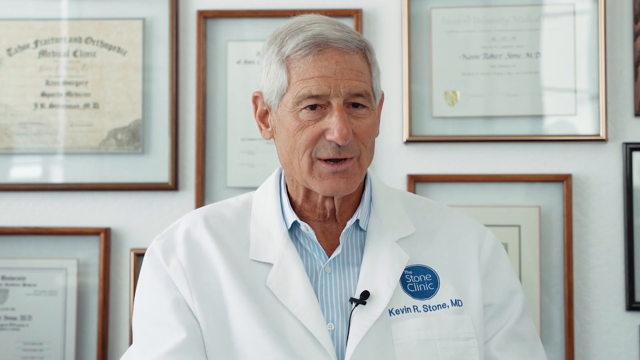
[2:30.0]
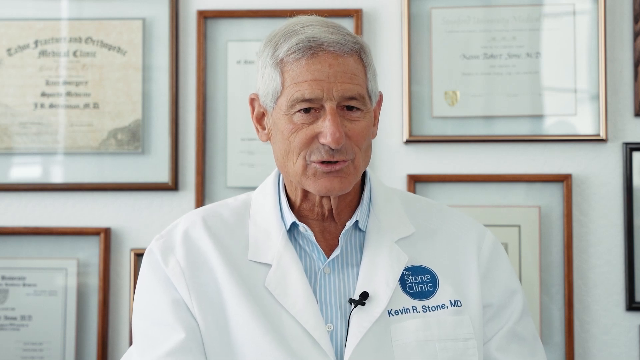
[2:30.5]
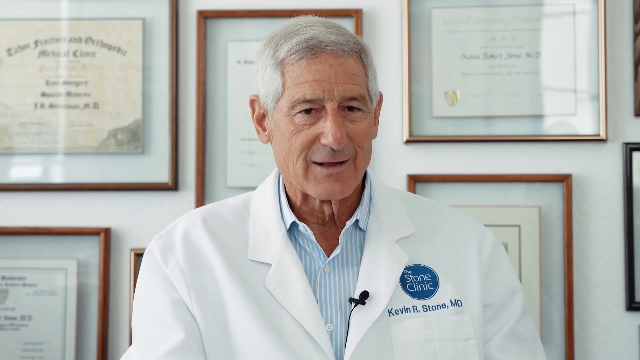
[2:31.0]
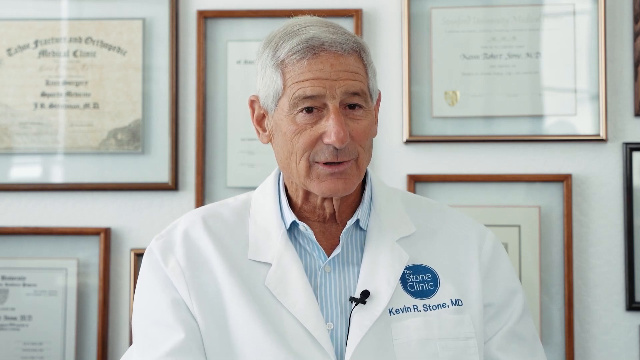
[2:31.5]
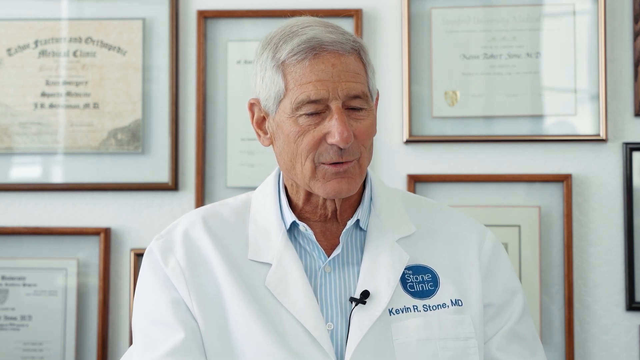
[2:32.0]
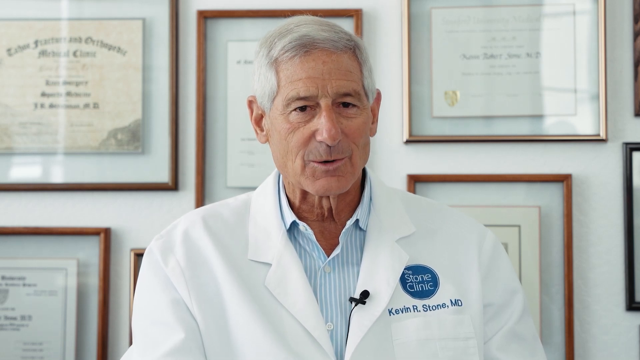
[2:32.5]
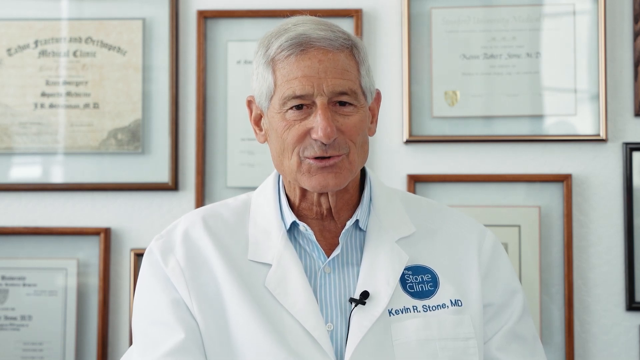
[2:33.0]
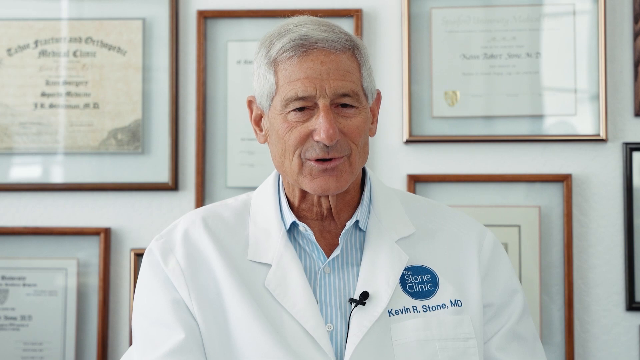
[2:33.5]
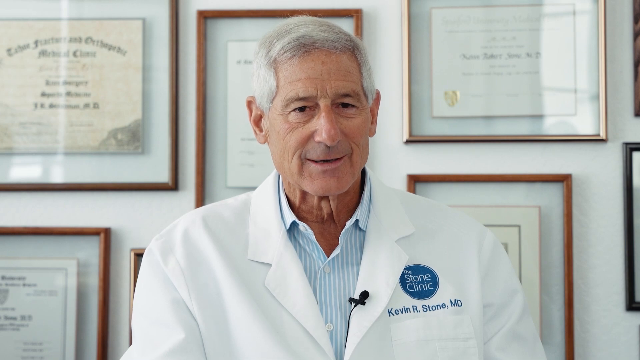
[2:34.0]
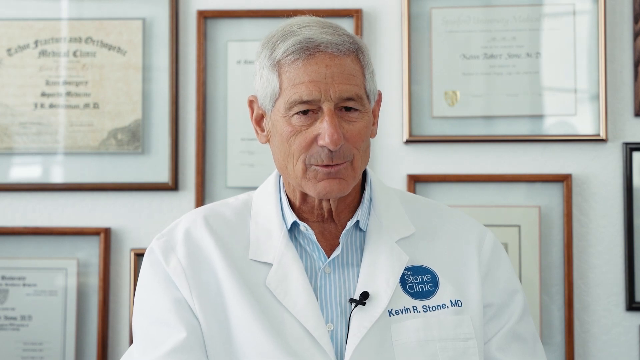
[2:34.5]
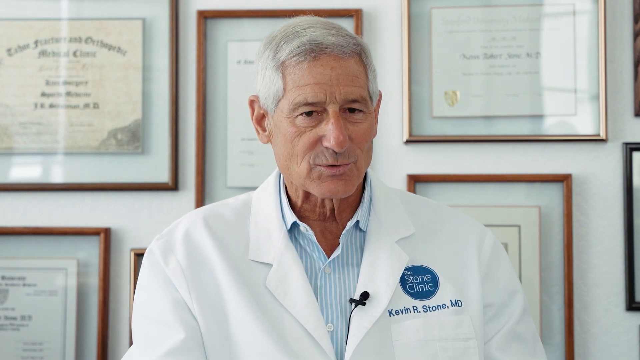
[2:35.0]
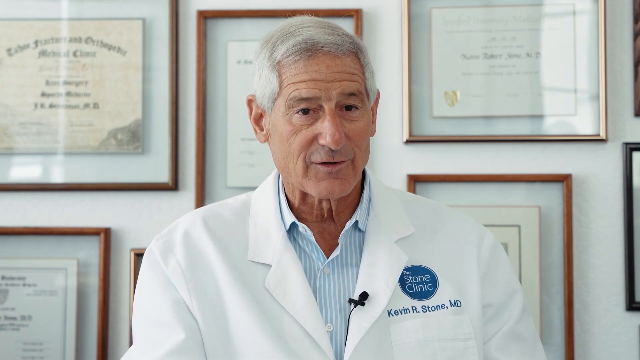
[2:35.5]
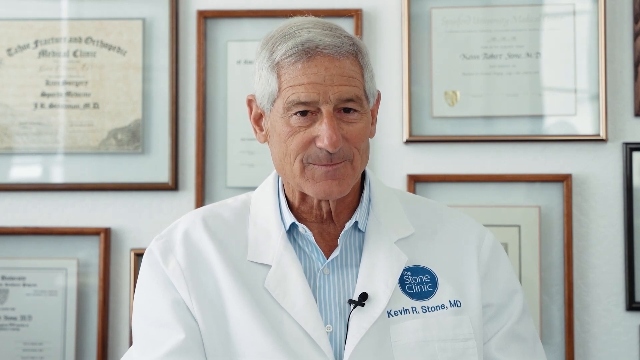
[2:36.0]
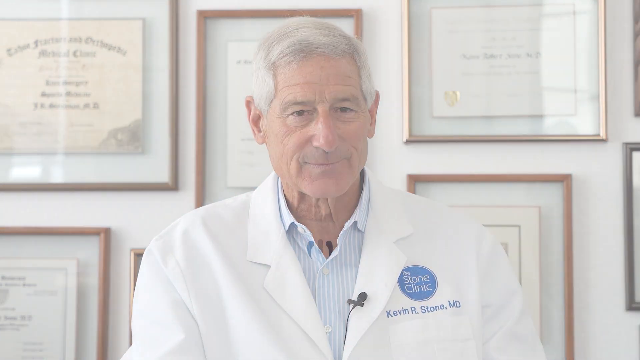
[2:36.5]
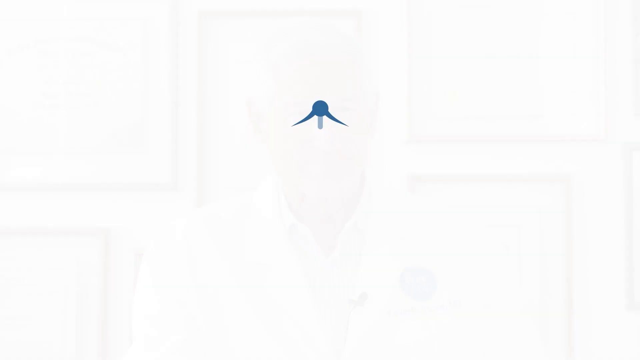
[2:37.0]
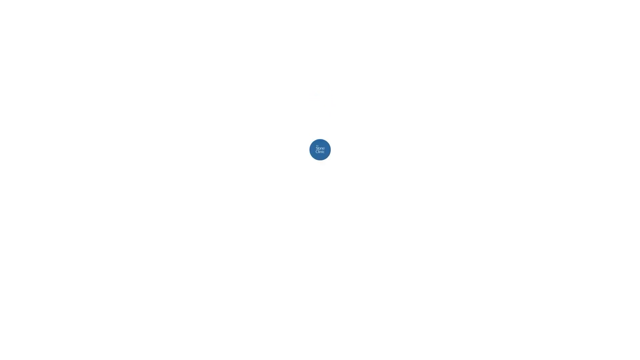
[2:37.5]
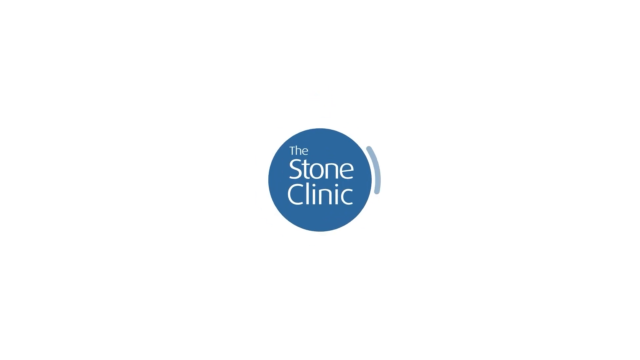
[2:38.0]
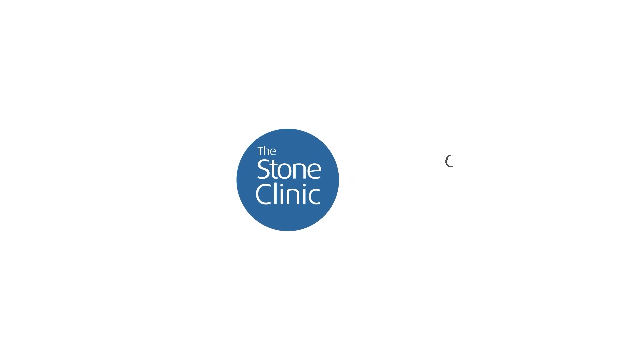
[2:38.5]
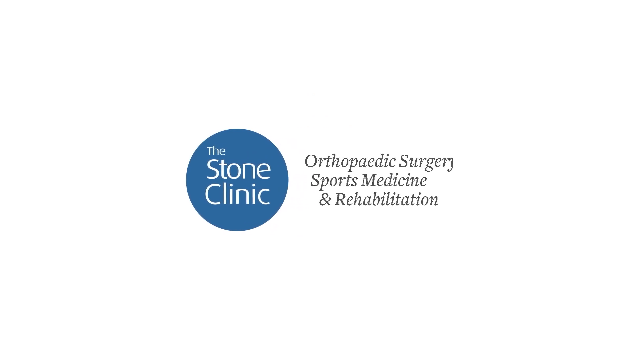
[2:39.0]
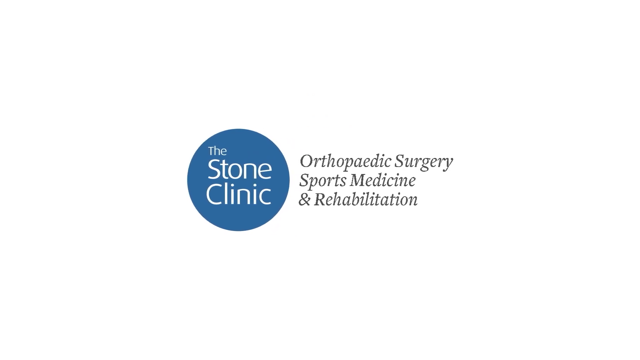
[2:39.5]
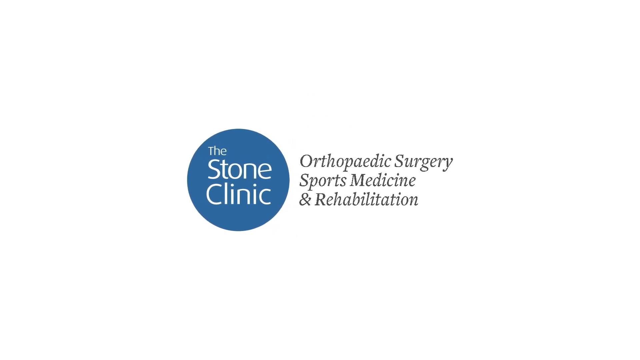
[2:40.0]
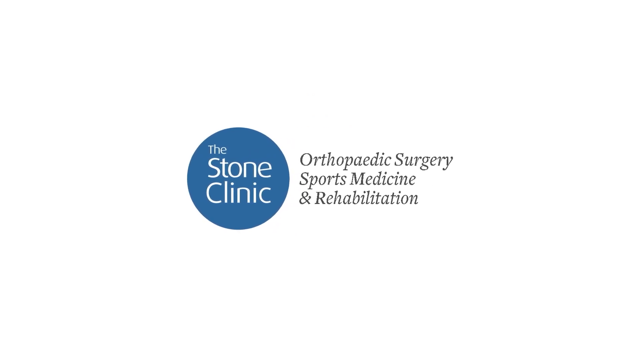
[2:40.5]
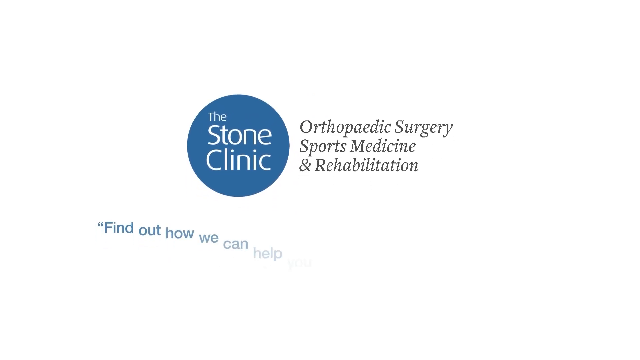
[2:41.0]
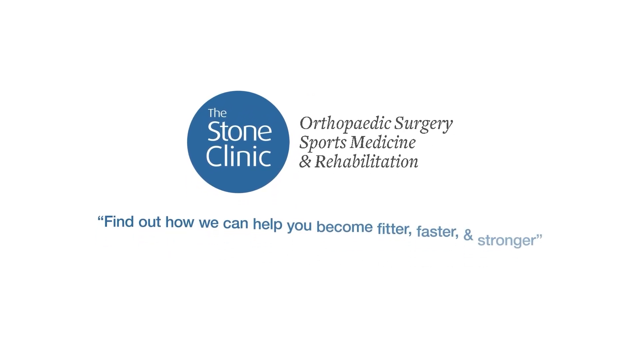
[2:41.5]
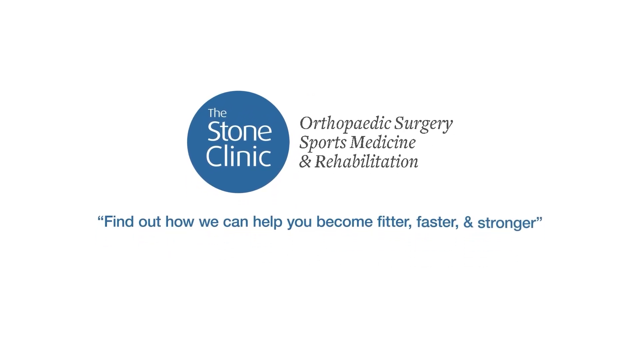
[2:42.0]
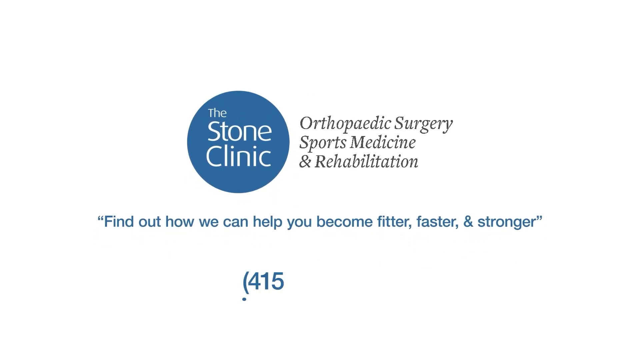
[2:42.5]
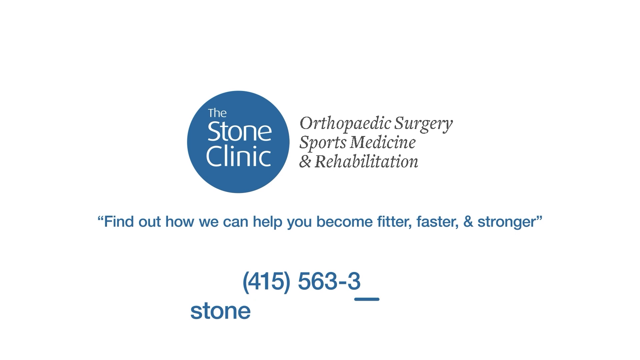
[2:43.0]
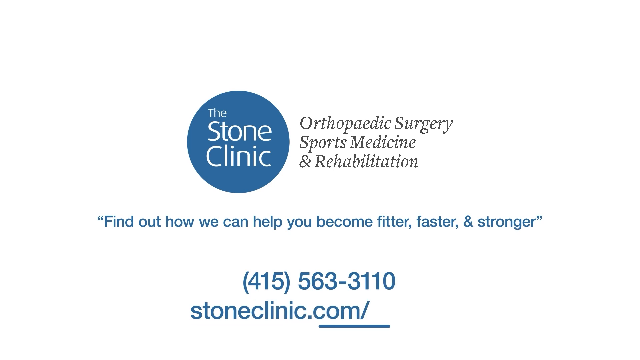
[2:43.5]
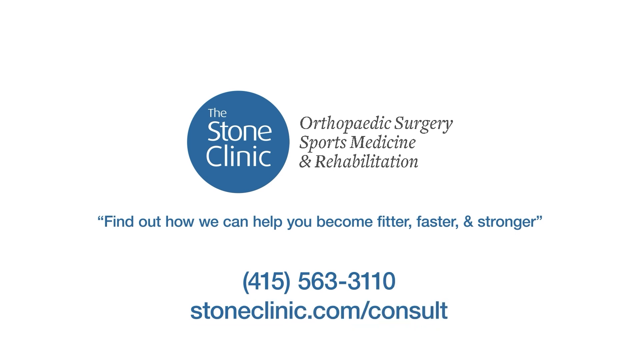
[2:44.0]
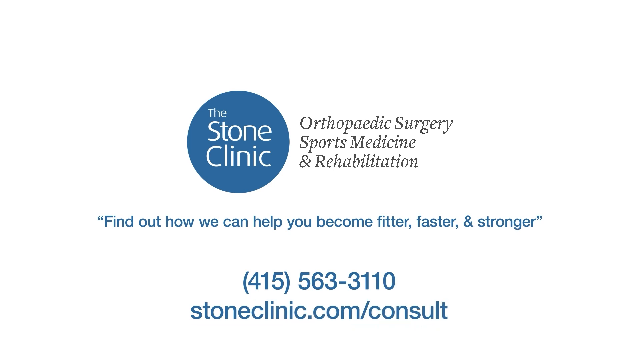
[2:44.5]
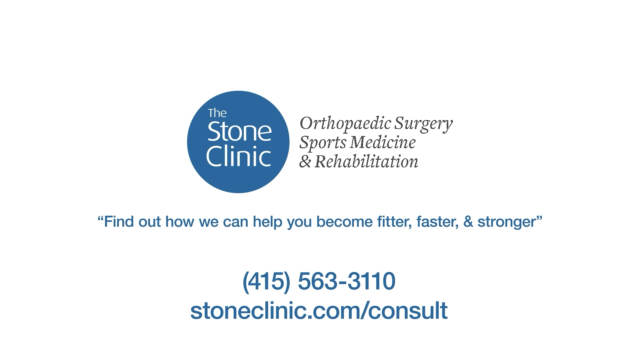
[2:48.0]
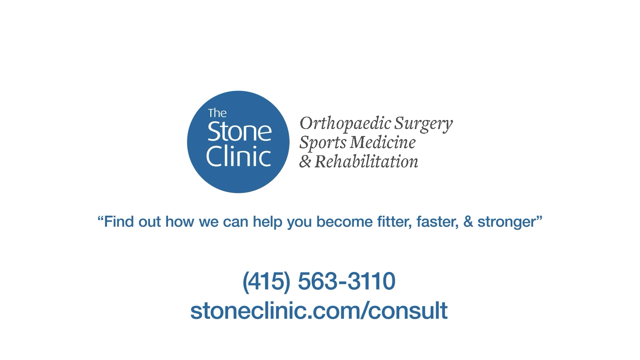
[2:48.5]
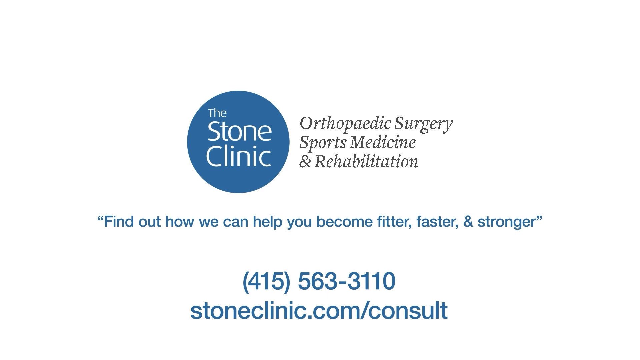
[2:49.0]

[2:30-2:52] Dr. Stone sits in his office being interviewed, in front of a wall with his framed diplomas and certificates hanging on it. He wears a white lab coat with a lapel microphone attached to the collar; on the left of the coat, the clinic's name, Stone Clinic, and his name are written in blue letters. The screen then changes to the Stone Clinic name in white writing on a blue circle. Next to it, on a white screen, text reads "orthopedic surgery, sports medicine and rehabilitation", with the motto "find out how we can help you become fitter, faster and stronger" underneath. Below that is the telephone number "415-563-3110", and beneath it the website "stoneclinic.com/consult".